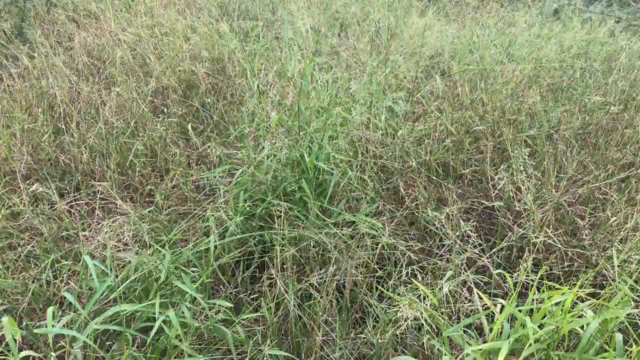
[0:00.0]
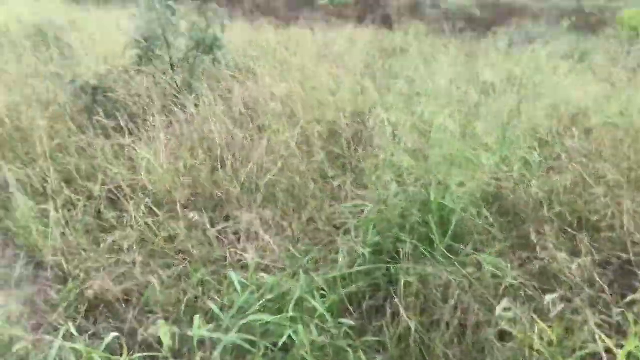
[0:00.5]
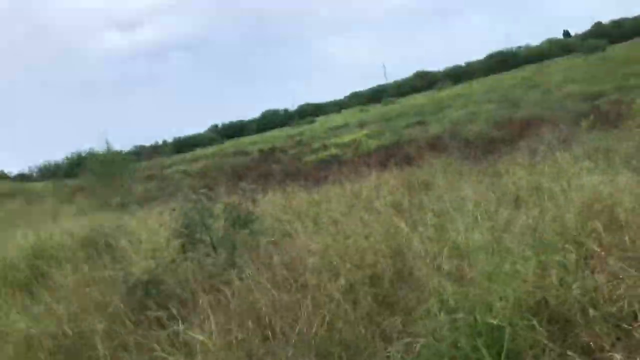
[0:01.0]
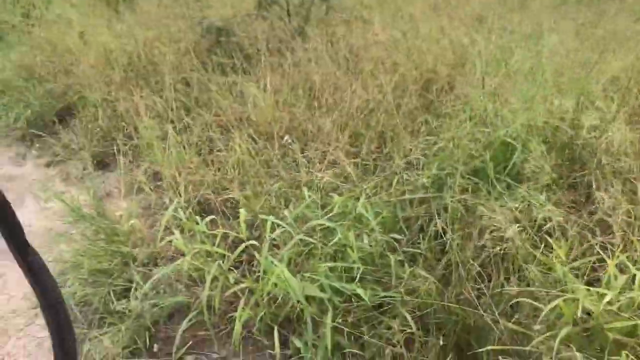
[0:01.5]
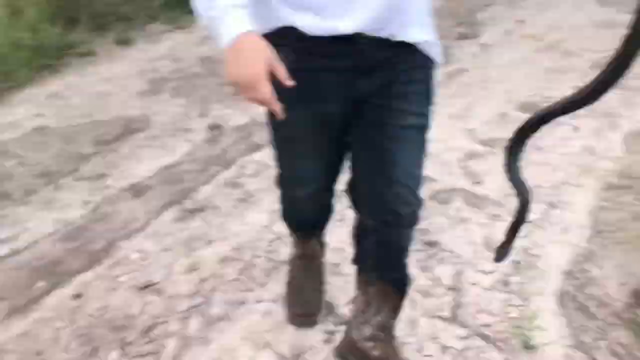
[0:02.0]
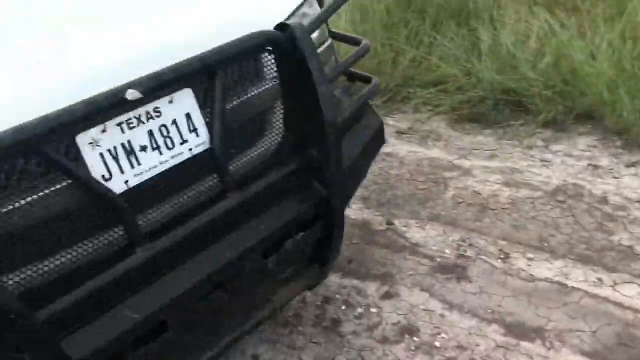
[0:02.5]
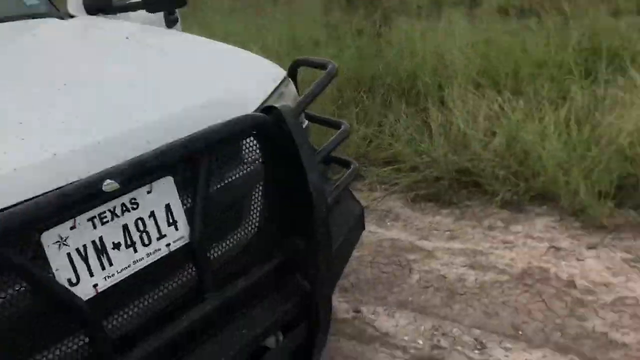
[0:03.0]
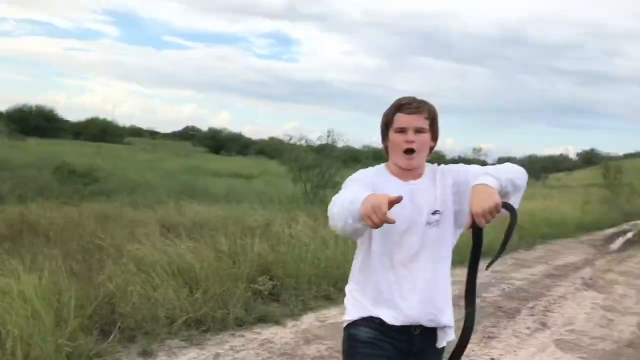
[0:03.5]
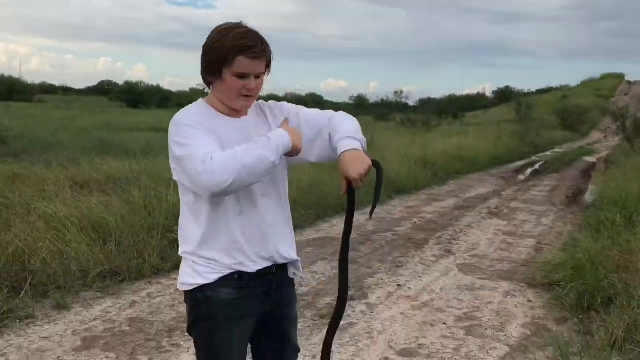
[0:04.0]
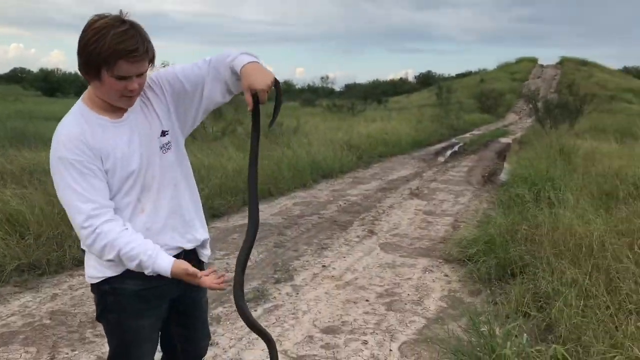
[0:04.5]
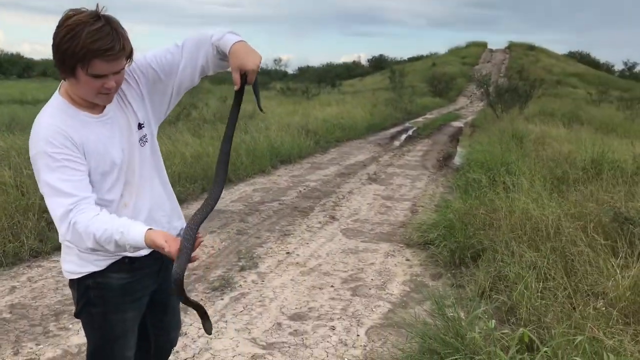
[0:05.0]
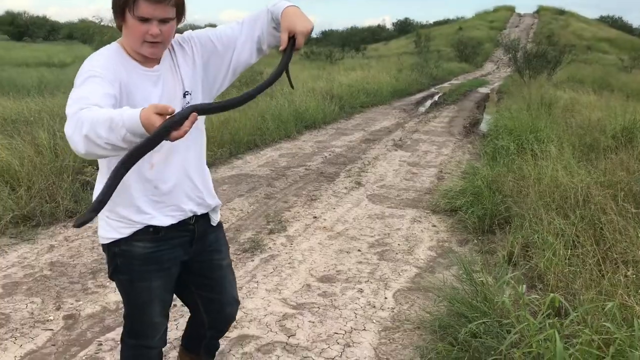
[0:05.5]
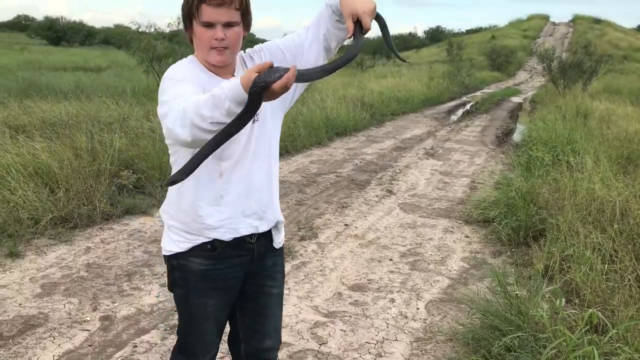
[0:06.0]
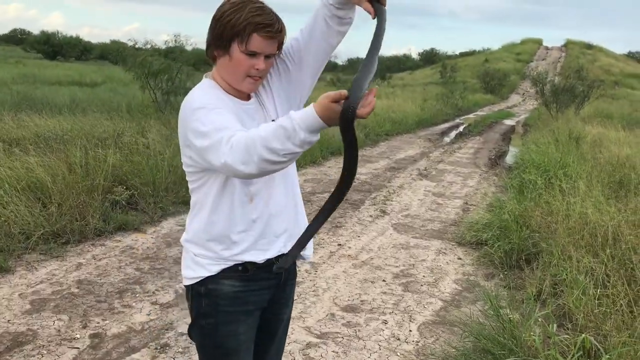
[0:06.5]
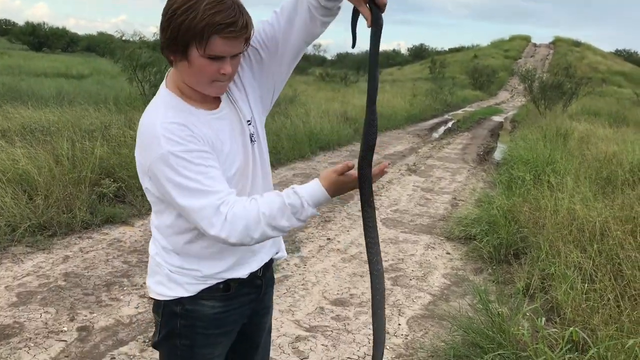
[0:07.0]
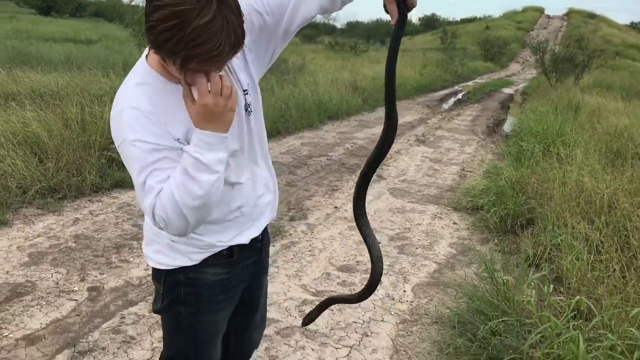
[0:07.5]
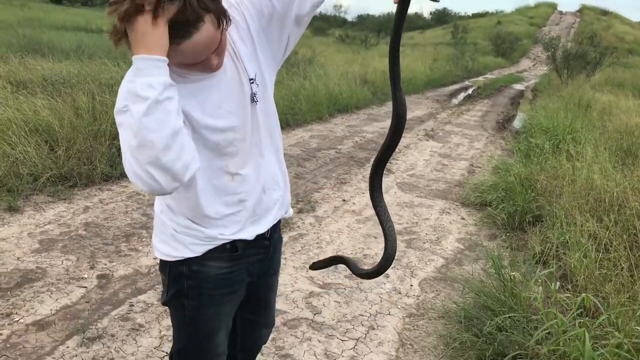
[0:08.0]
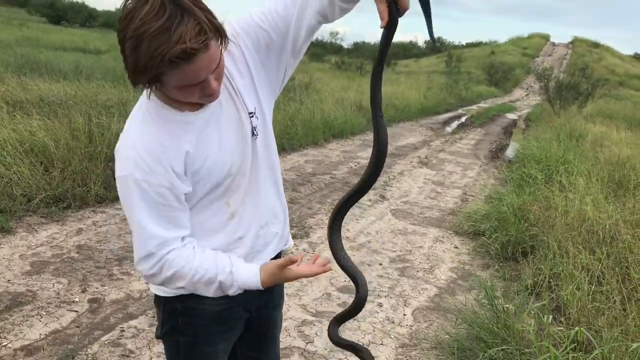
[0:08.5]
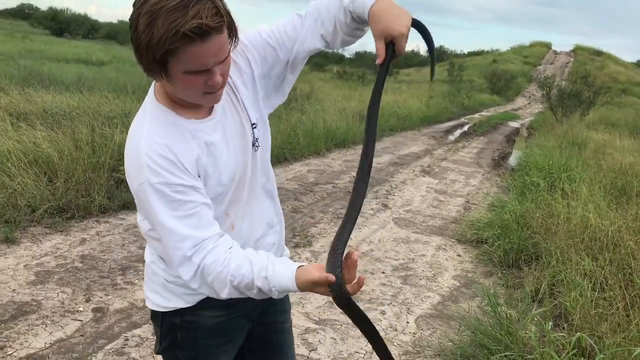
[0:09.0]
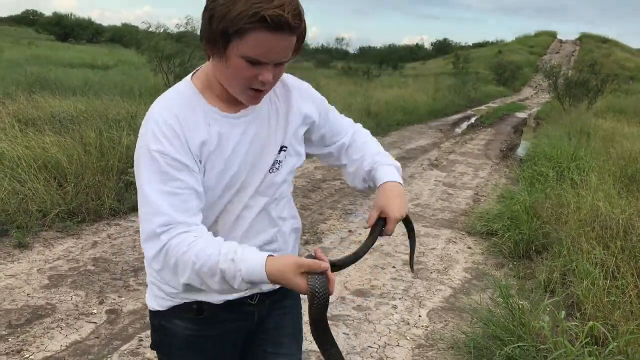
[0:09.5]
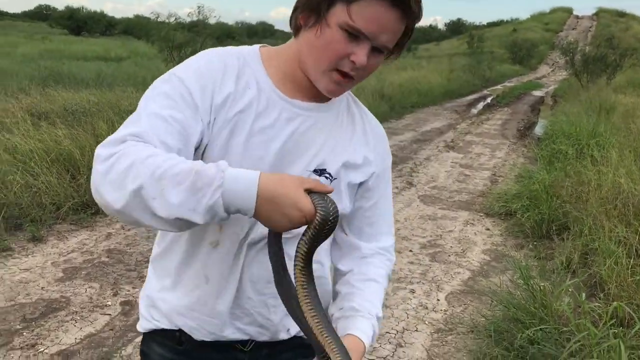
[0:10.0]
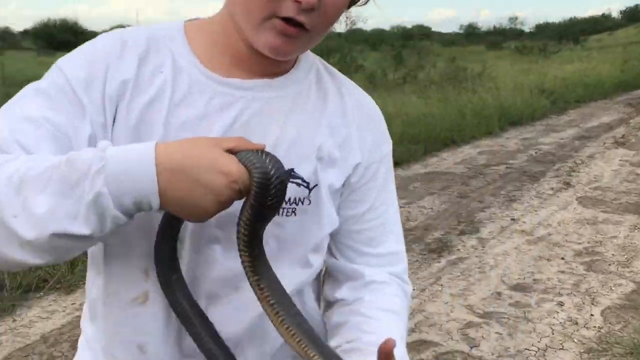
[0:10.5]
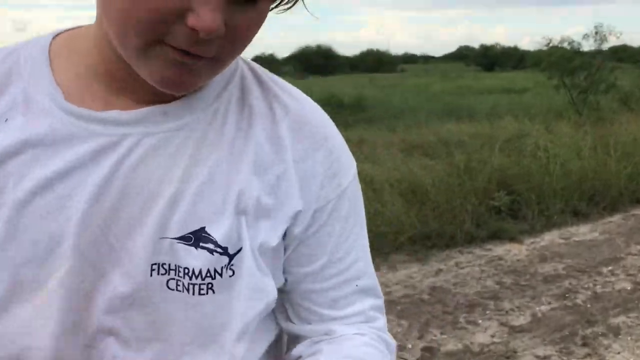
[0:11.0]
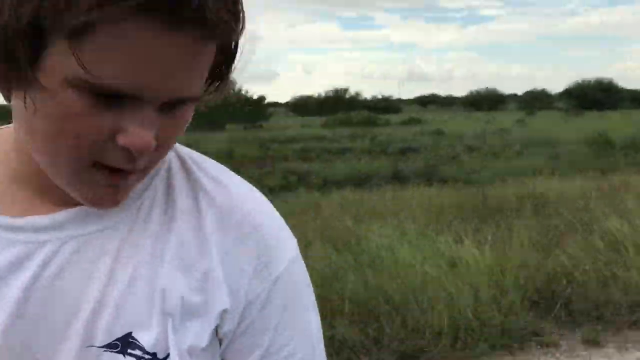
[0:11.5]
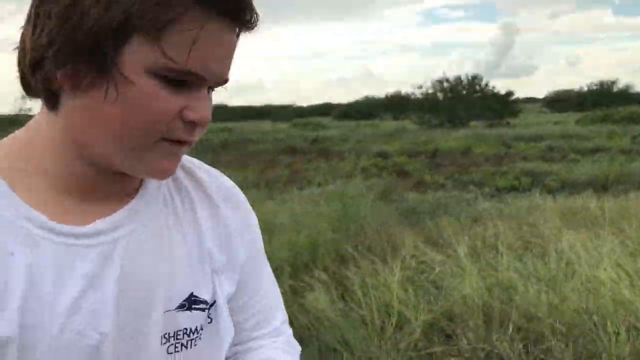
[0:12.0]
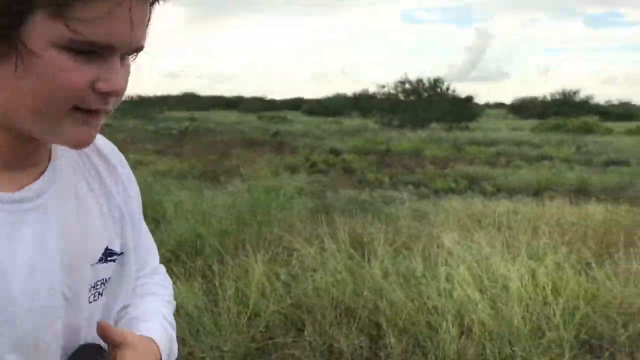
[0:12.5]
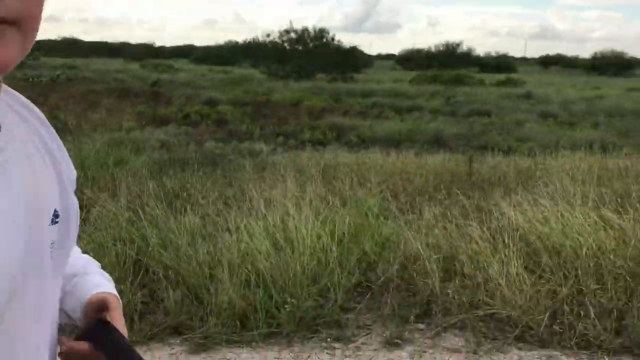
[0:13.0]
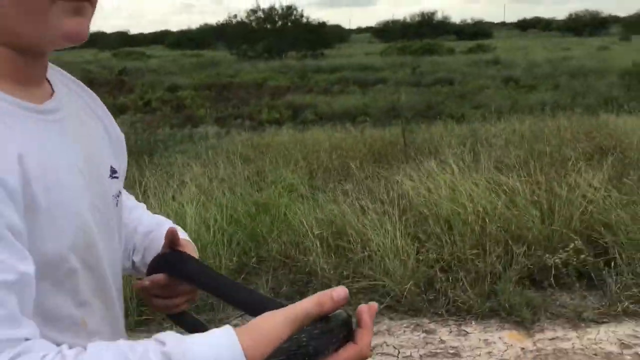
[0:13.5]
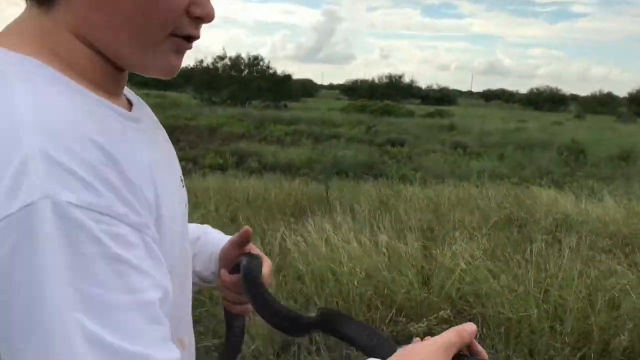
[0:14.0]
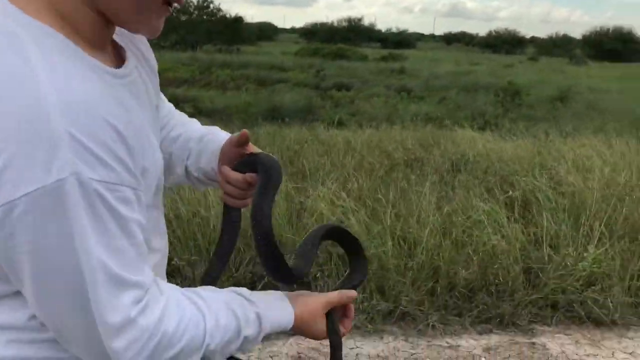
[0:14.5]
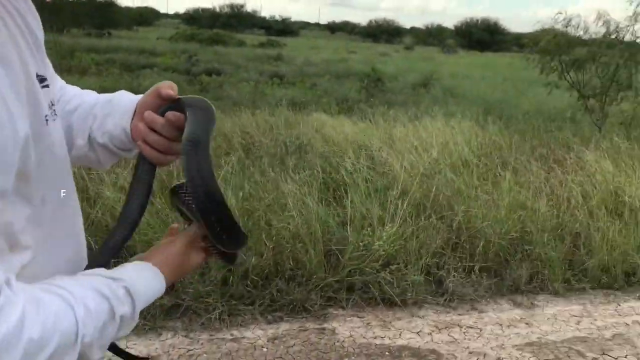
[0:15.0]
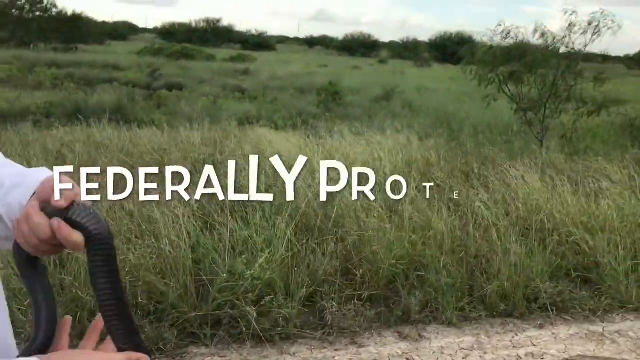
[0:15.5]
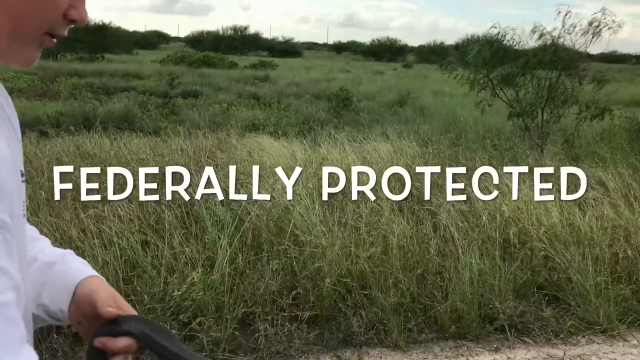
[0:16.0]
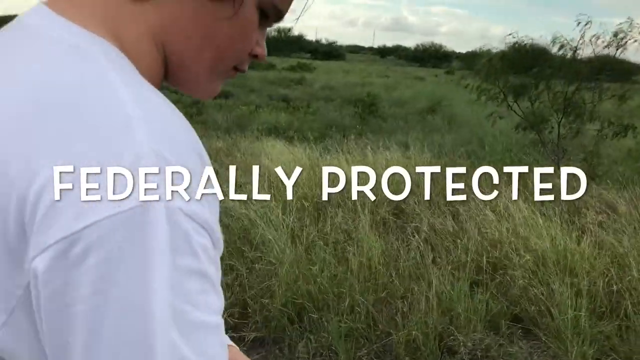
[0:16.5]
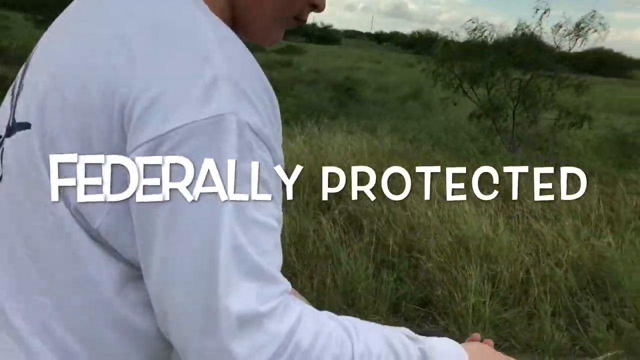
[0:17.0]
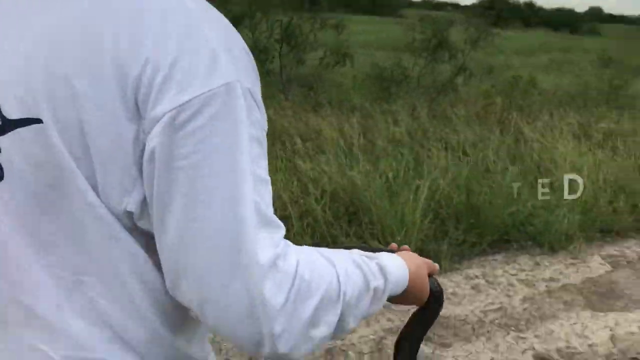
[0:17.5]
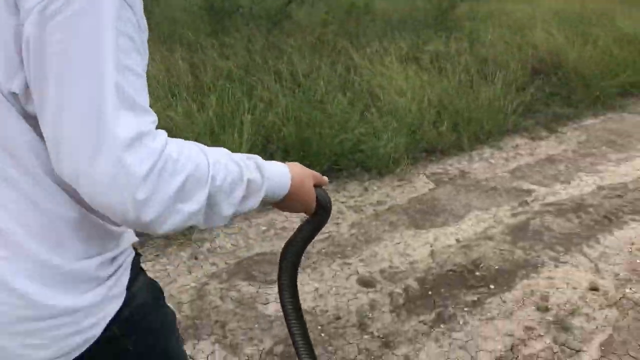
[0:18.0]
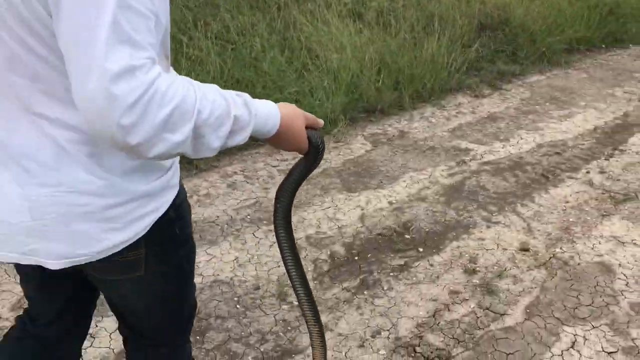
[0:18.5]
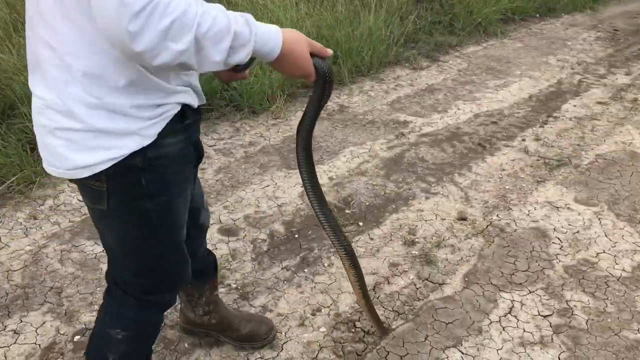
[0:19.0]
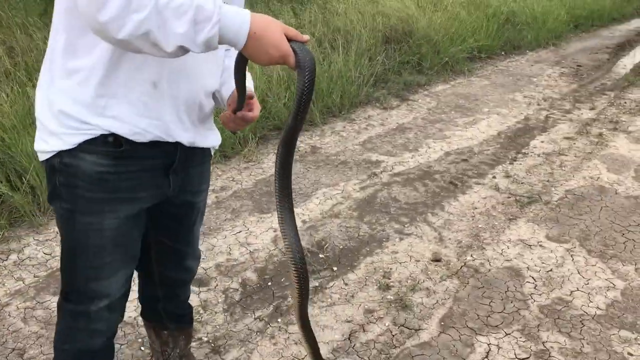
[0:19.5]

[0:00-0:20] In a grassy field, a young guy holds up a really long black snake while standing on a dirt road out in the middle of the field. The terrain is very hilly and uneven, just dirt road and grass. The snake does not seem to like being held, and the kid shows no fear. The words "federally protected" flash up on the screen. The shot keeps moving to the grass, where there is some dry grass among the tall growing grass; it is hard to tell whether it is burnt, but it appears to be just dead grass. There is a quick shot of his black and white vehicle, which could be an official park ranger type vehicle, though it is not seen well.